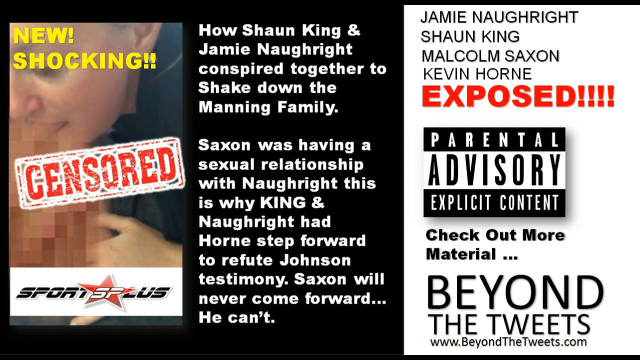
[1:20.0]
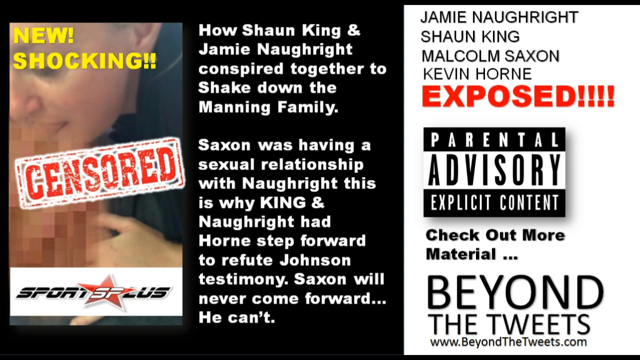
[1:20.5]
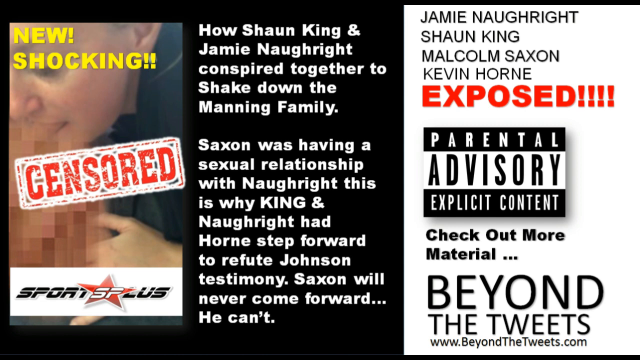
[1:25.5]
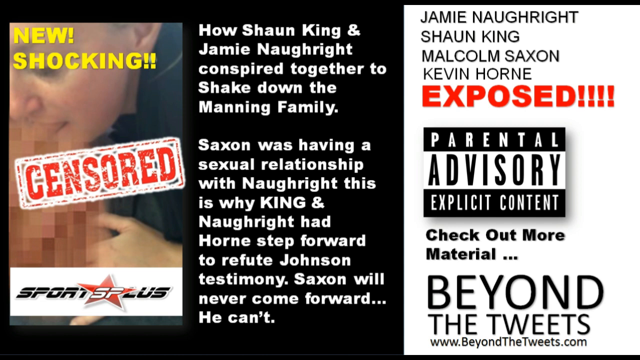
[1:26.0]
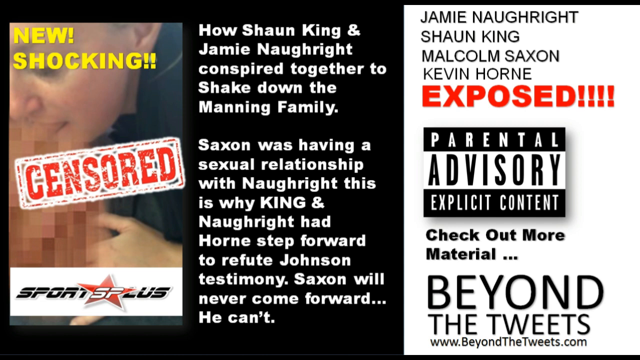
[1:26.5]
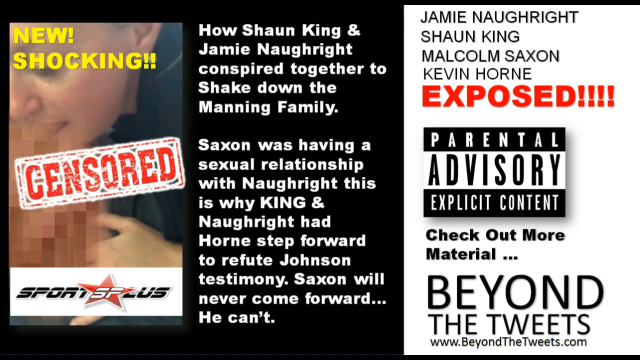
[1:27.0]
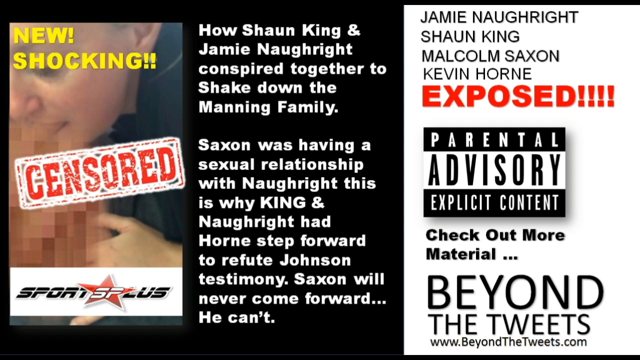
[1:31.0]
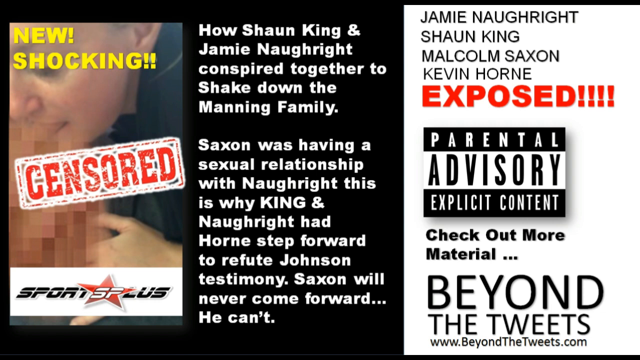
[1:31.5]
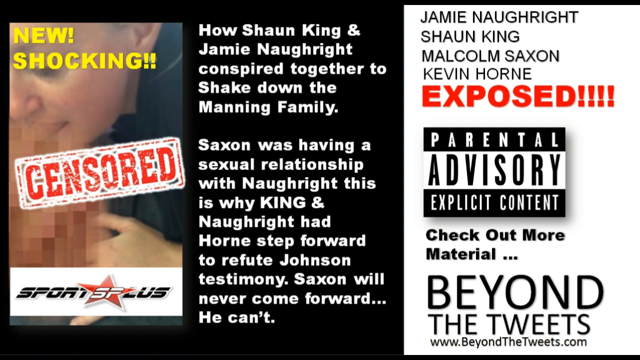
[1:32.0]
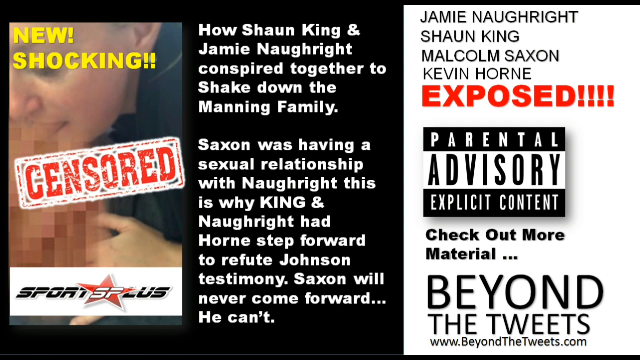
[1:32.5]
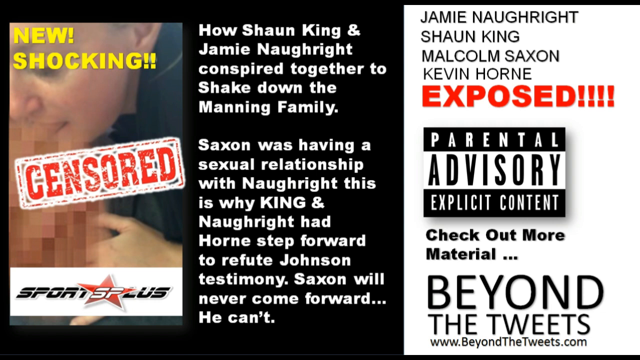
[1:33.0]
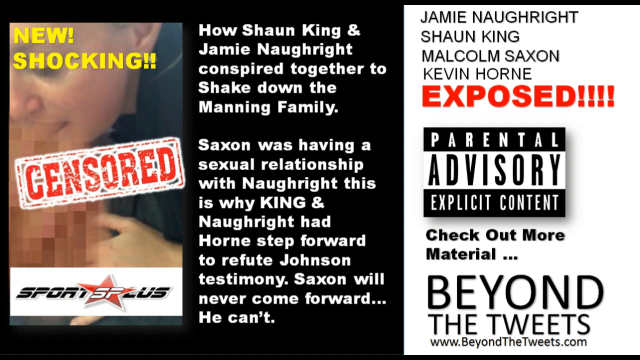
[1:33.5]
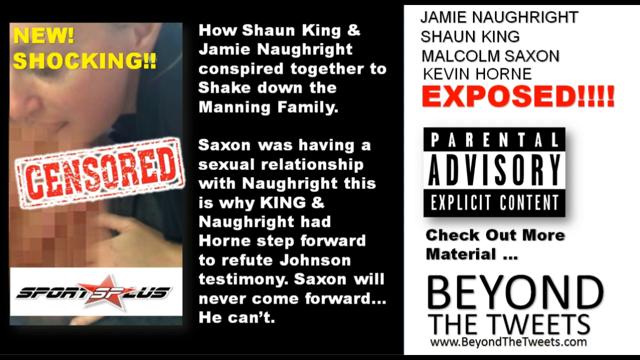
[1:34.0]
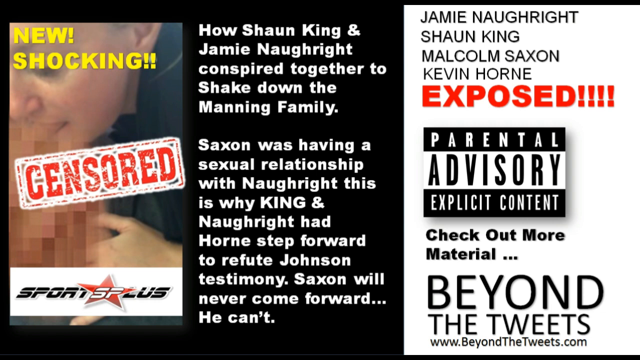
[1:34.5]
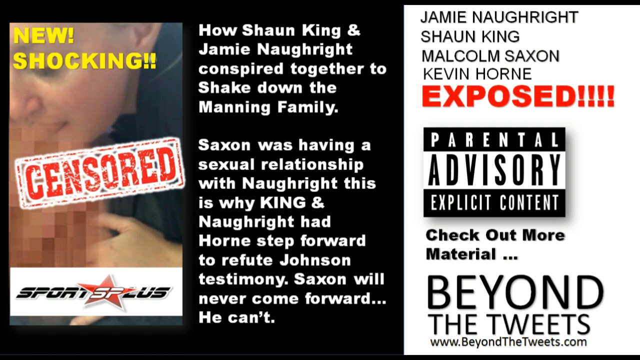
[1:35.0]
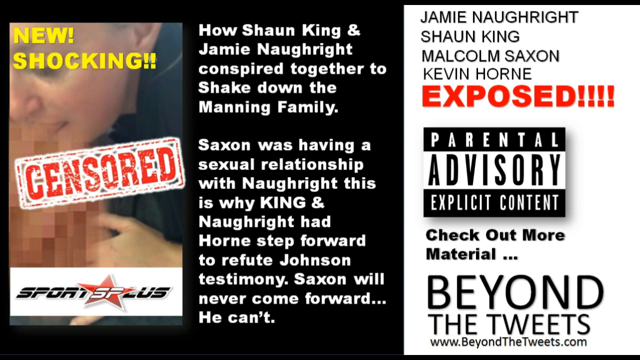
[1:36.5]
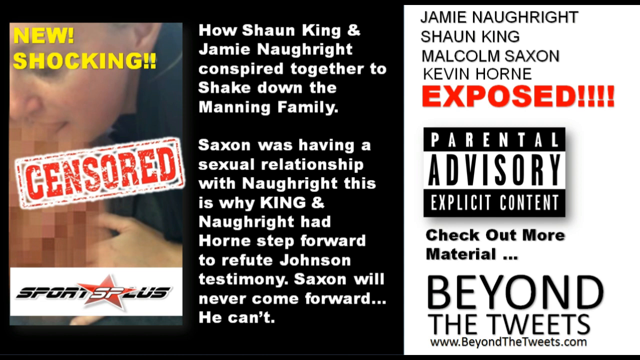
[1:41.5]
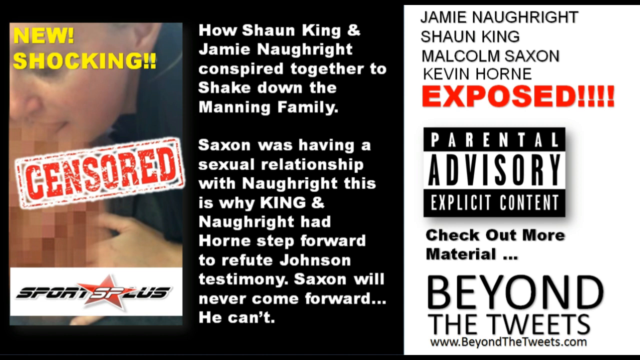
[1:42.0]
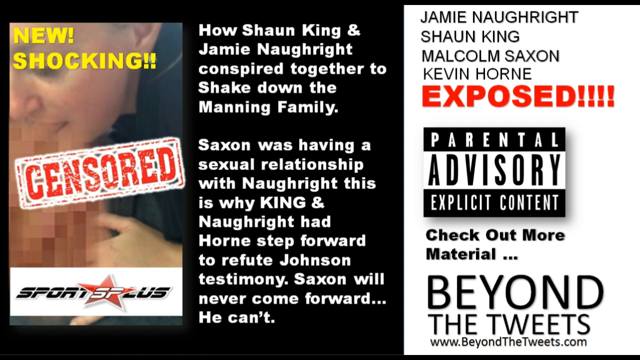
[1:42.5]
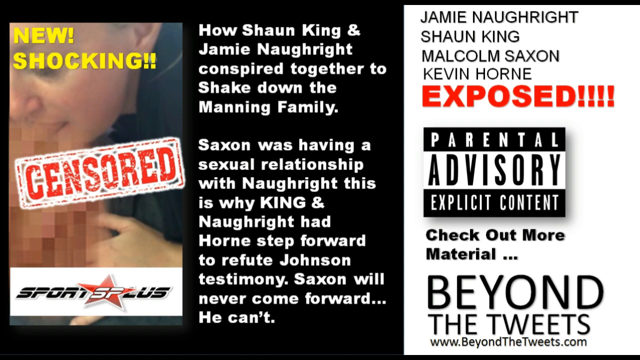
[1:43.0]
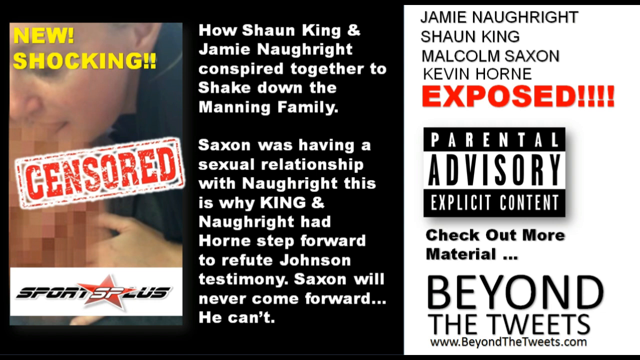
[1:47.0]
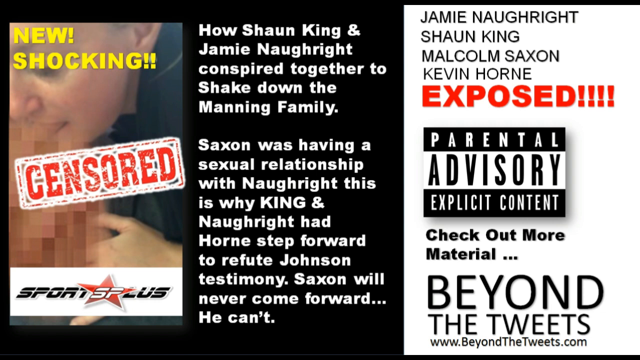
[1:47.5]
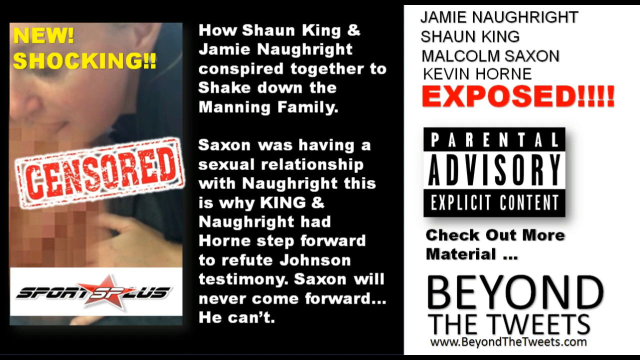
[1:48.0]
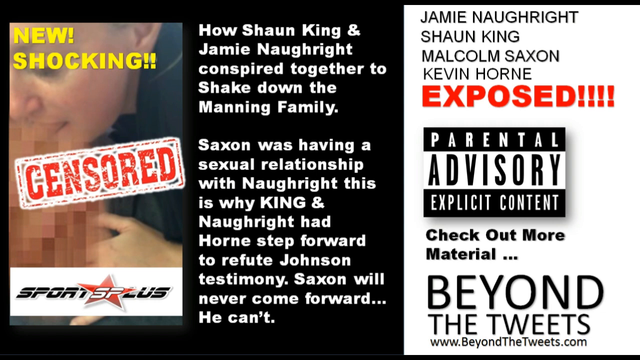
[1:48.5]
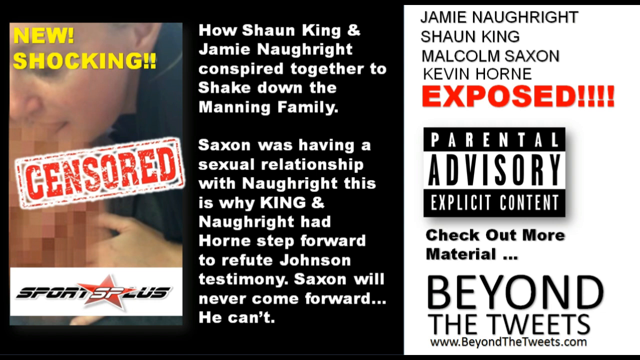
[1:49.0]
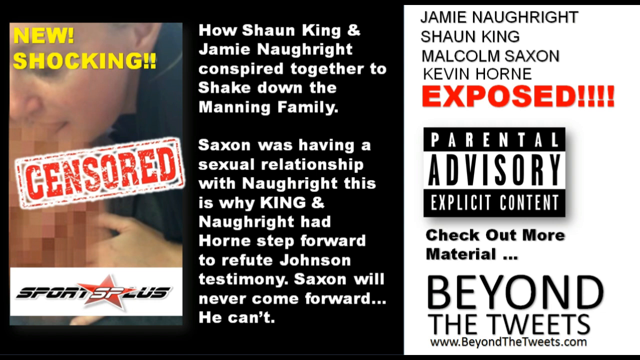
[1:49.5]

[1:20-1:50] The exposed information about Jemima Wright, Sean King, Malcolm Saxon, and Kevin Warren remains on screen, marked as beyond the tweets and as explicit content requiring parental advisory. It reads "how Sean King and Jamie Naughright conspired together to shake down the Manning family. Saxon was having a sexual relationship with Naughright. This is why King and Naughright had one step forward to refute Johnson's testimony." Another advert is below the picture on the screen, and the website for Beyond Tweets is below the text in the right corner.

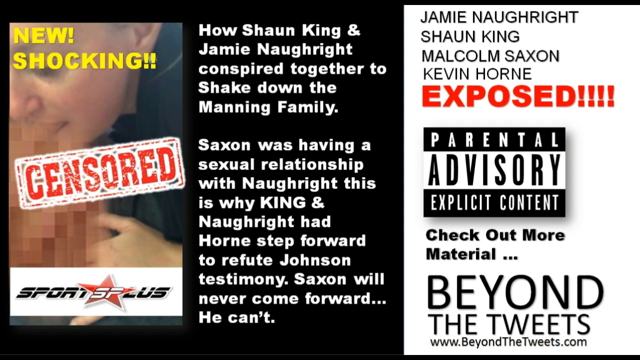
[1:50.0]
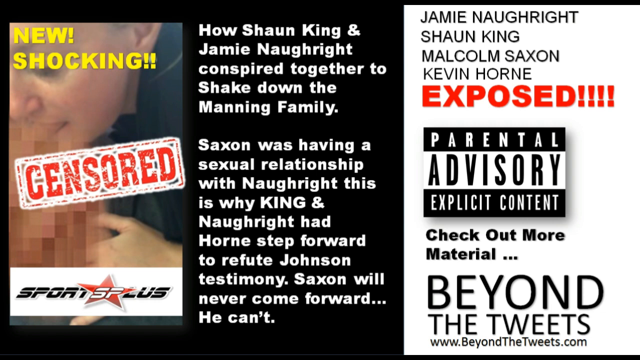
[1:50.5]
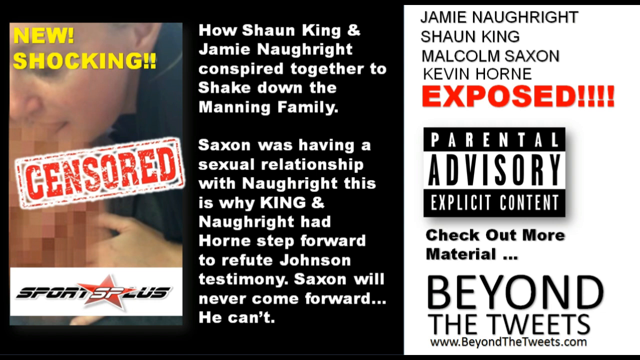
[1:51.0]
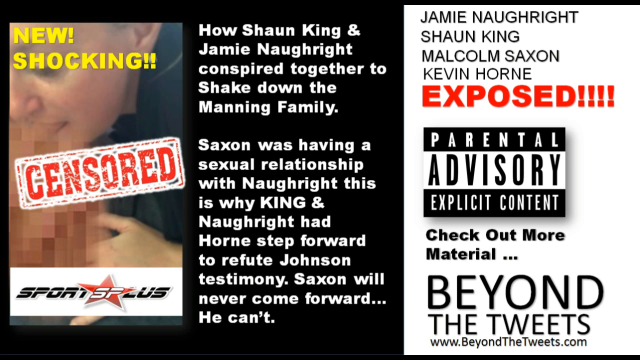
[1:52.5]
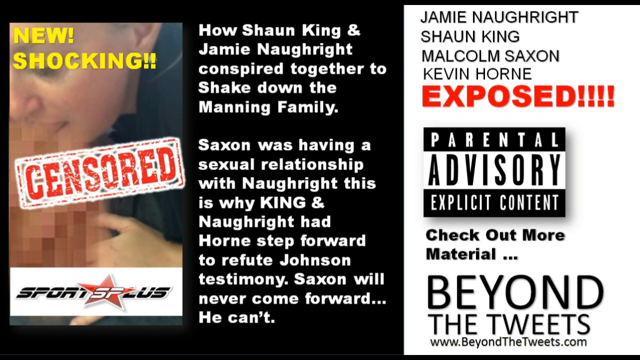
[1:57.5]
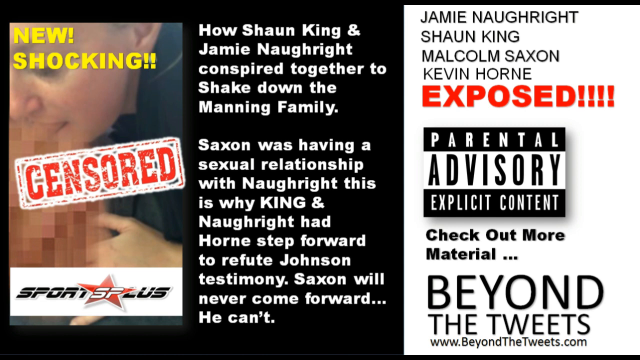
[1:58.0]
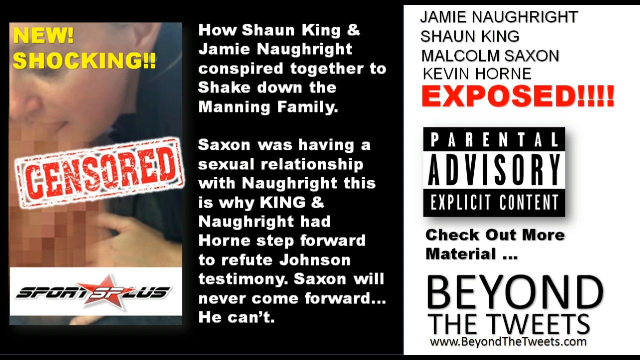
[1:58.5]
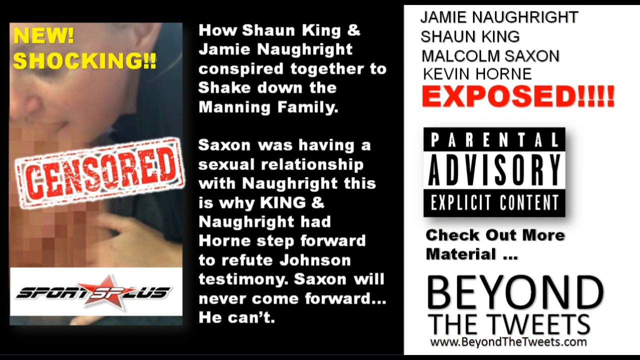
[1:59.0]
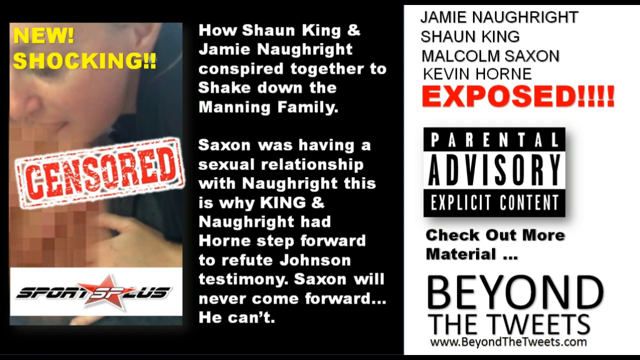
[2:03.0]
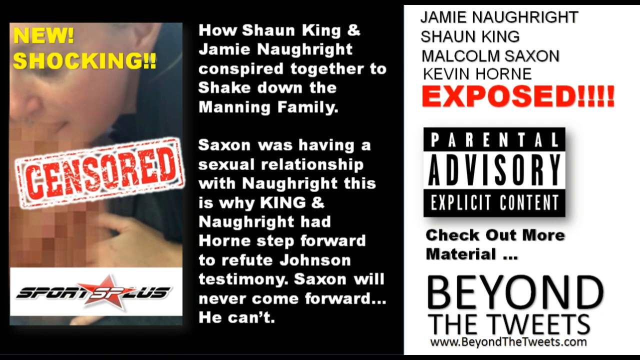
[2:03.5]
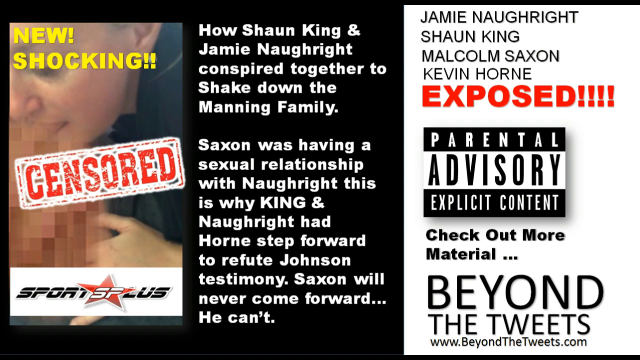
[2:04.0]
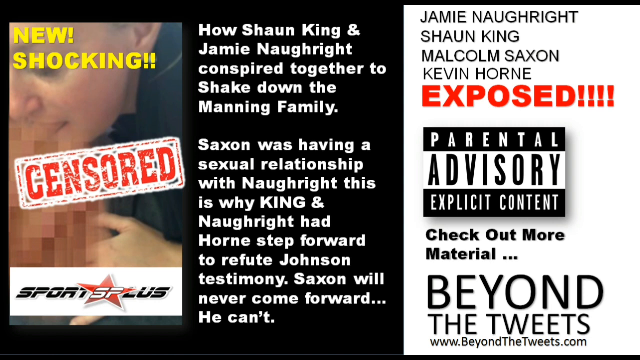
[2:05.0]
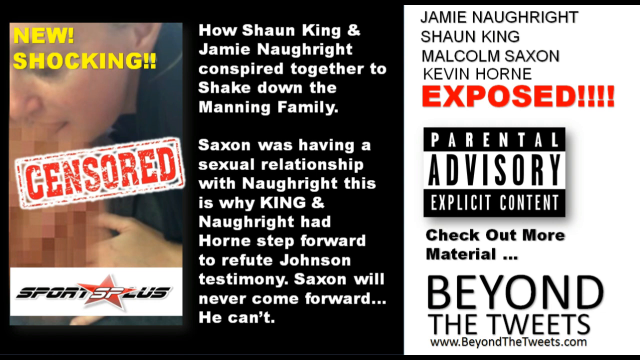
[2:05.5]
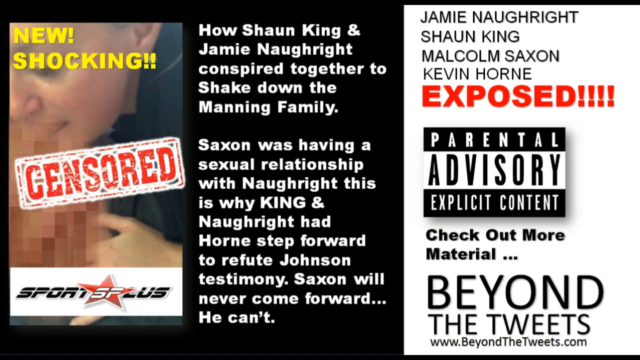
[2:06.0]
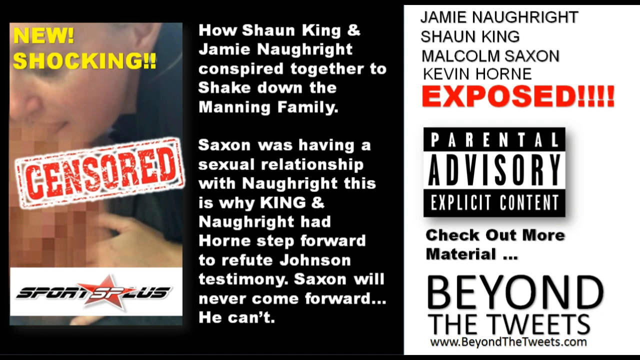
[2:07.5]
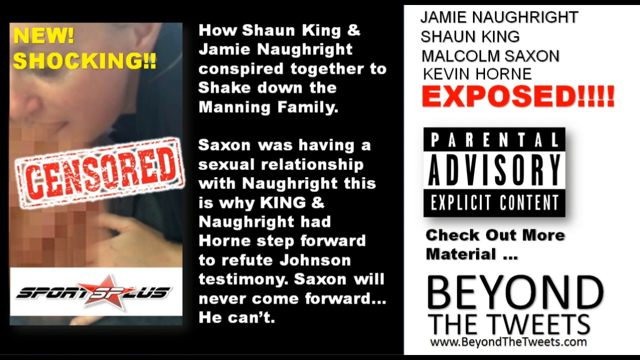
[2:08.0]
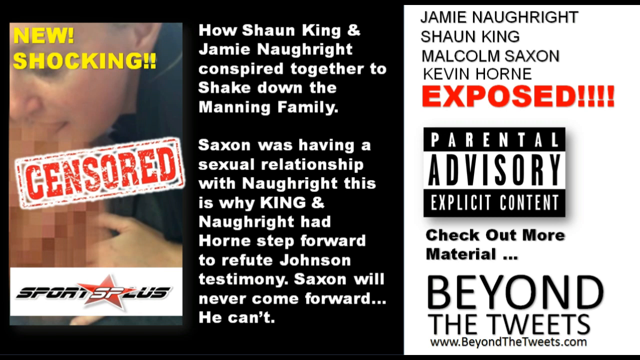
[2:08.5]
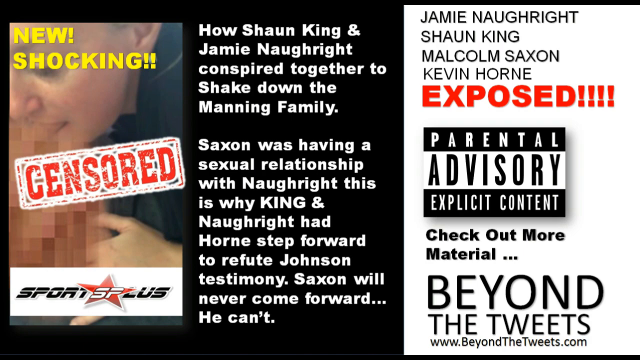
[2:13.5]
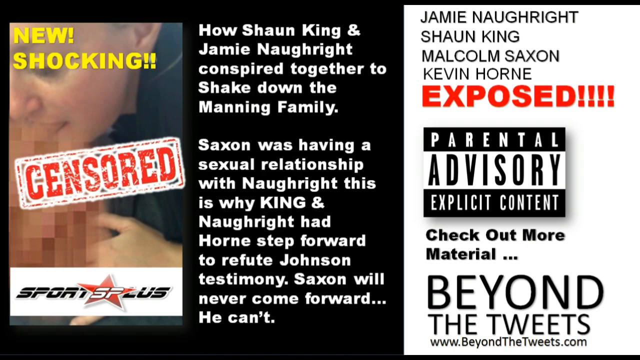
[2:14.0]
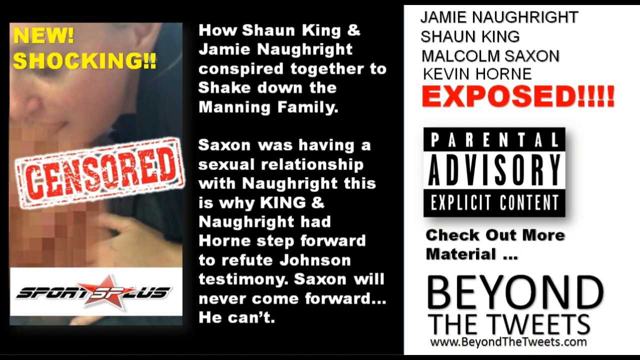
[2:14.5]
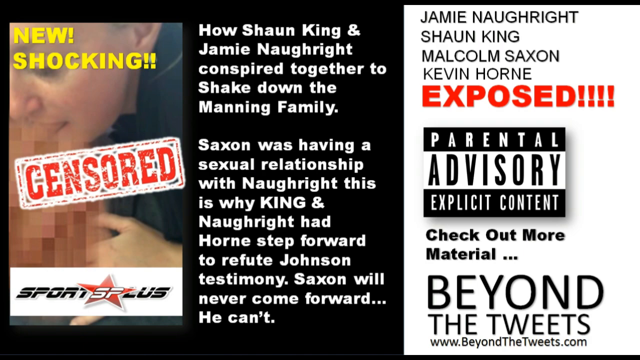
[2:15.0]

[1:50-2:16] The same exposed post remains on screen, with warnings written in red. On the far left, the word "censored" is written in bold red in a white rectangle. On the far right, the word "exposed" is written in bold red with four exclamation marks. Another warning says the information is explicit content requiring parental control. The text reads "how Sean King and Jamie Naughright conspired together to shake down the Manning family. Saxon was having a sexual relationship with Naughright. This is why King and Naughright had one step forward to refute Johnson's testimony. Saxon will never come forward. He can't." The information is a tweet, and a Twitter website appears right below the bold words "beyond the tweets."